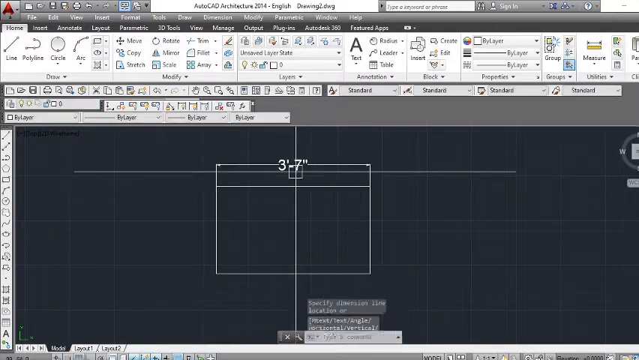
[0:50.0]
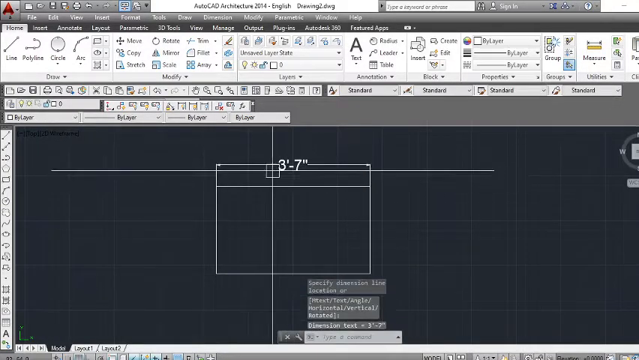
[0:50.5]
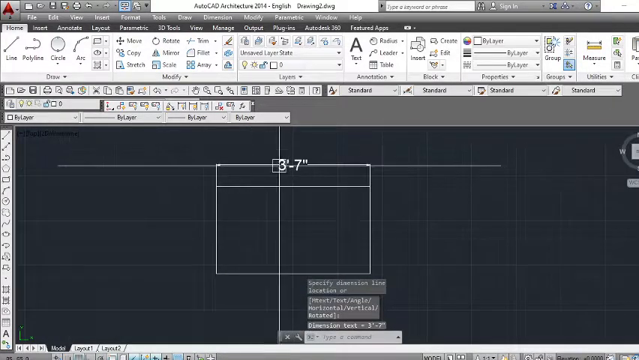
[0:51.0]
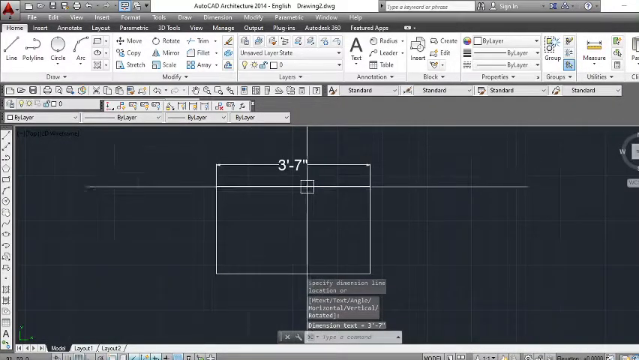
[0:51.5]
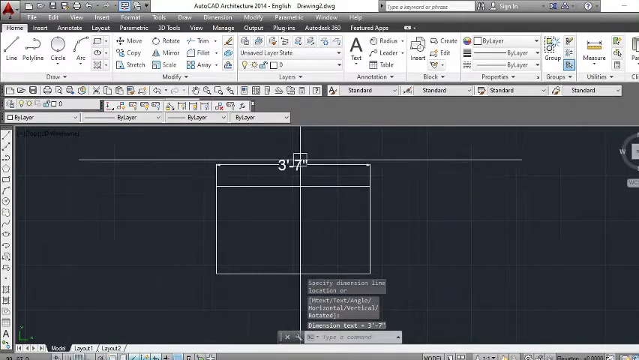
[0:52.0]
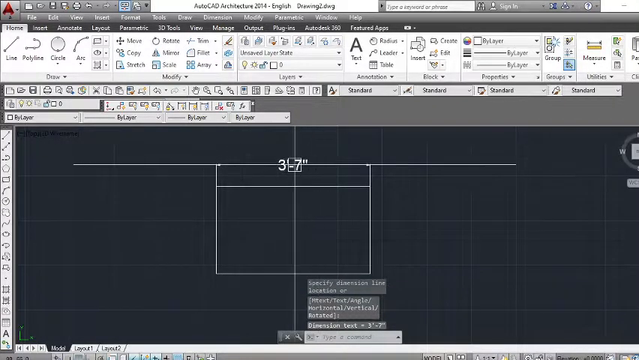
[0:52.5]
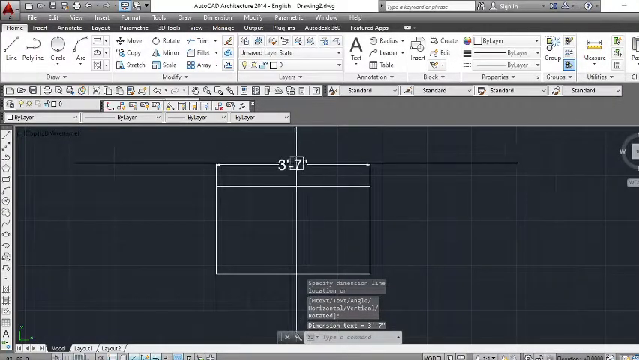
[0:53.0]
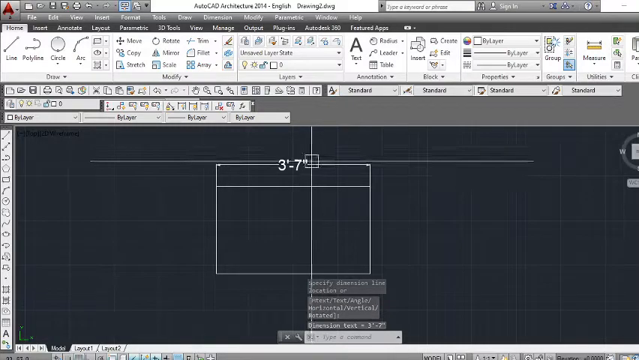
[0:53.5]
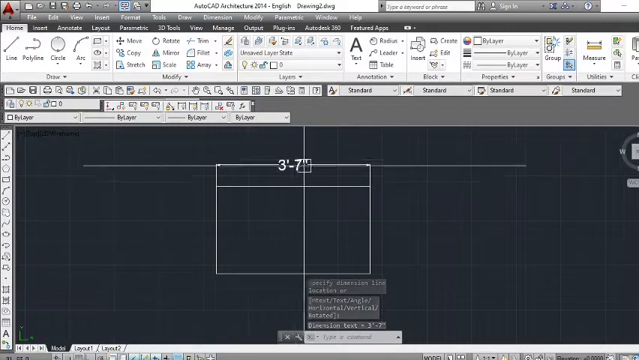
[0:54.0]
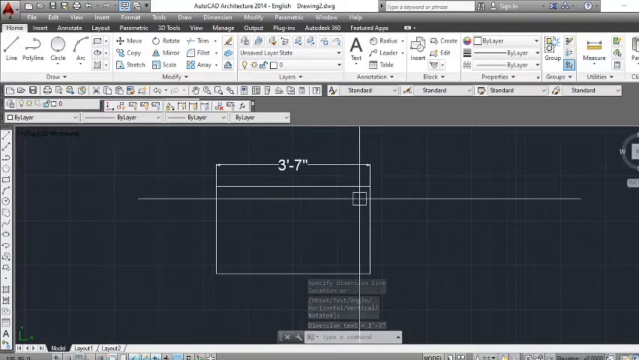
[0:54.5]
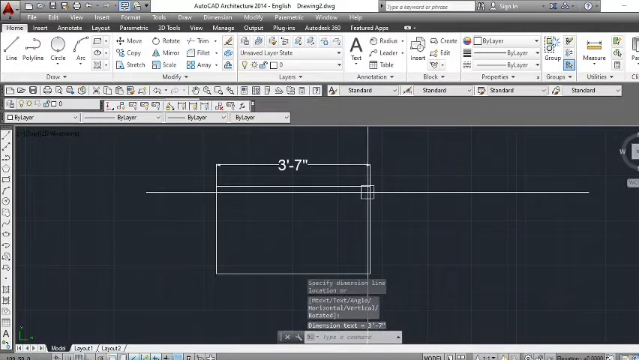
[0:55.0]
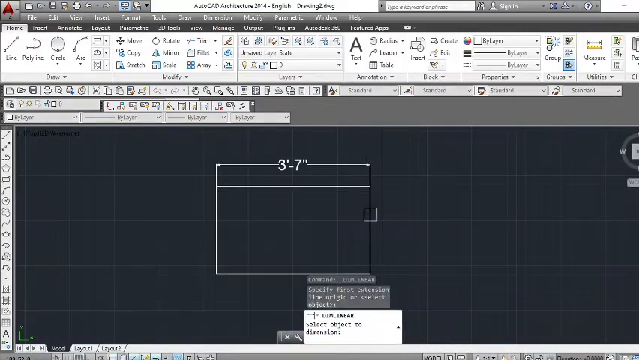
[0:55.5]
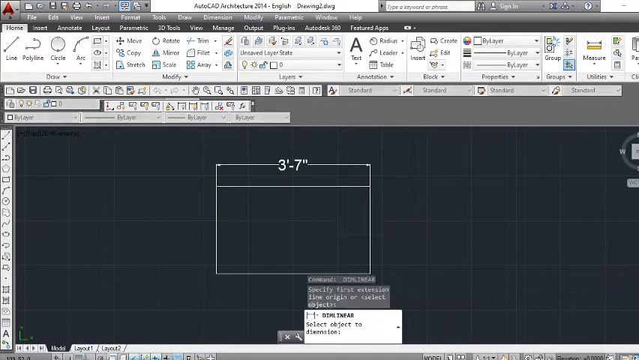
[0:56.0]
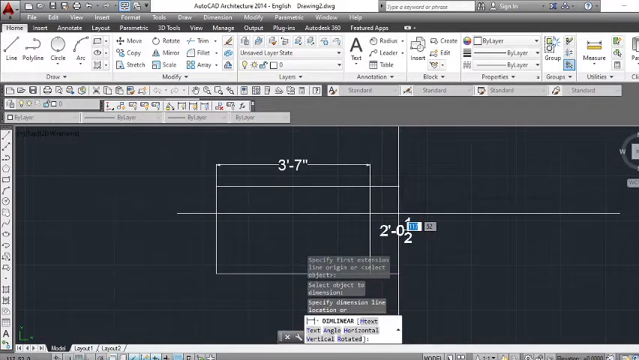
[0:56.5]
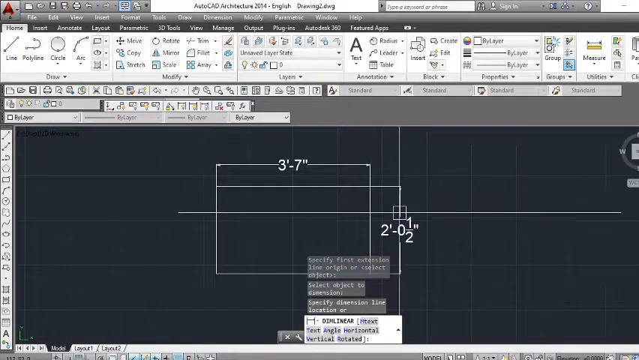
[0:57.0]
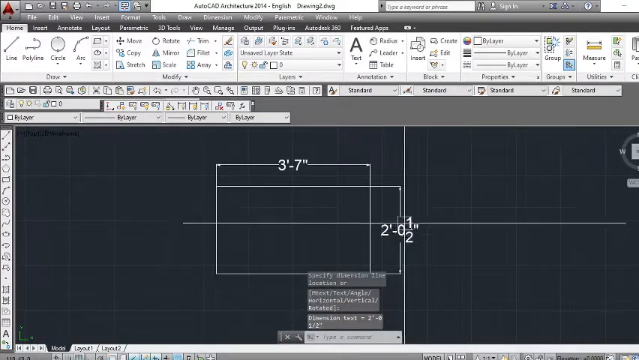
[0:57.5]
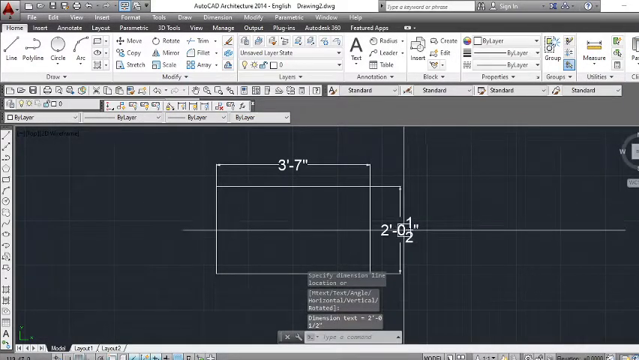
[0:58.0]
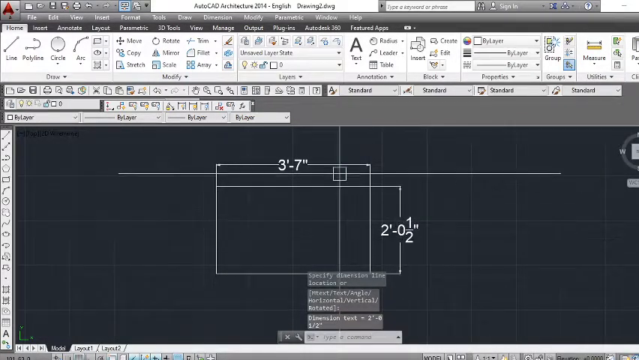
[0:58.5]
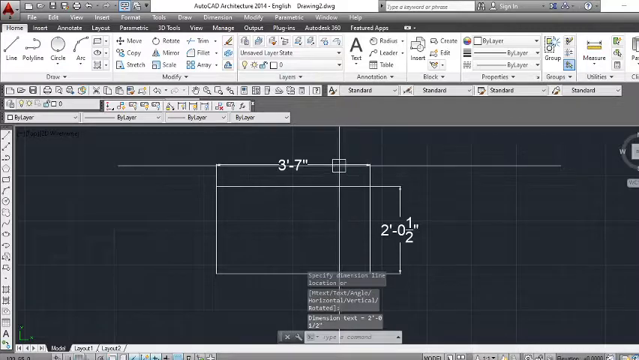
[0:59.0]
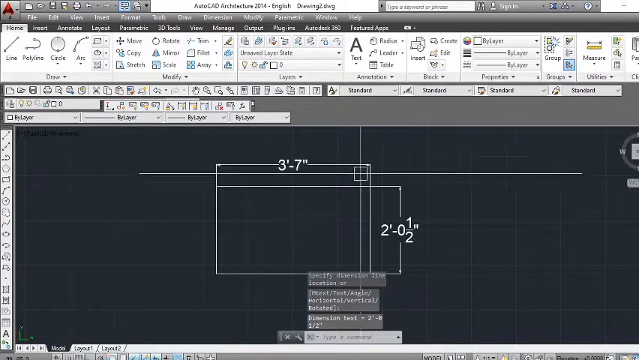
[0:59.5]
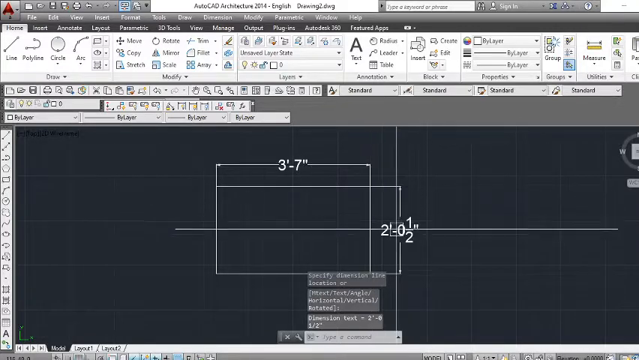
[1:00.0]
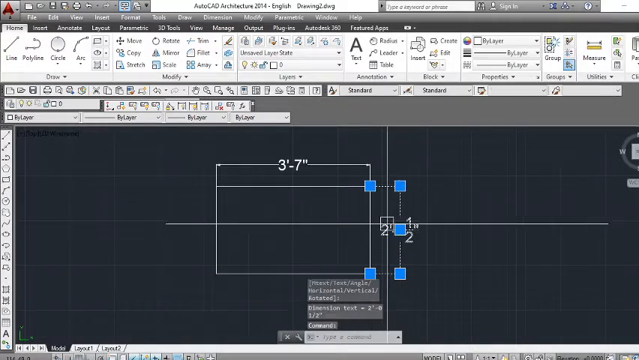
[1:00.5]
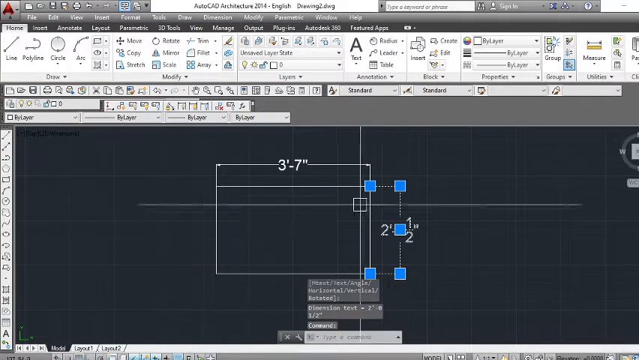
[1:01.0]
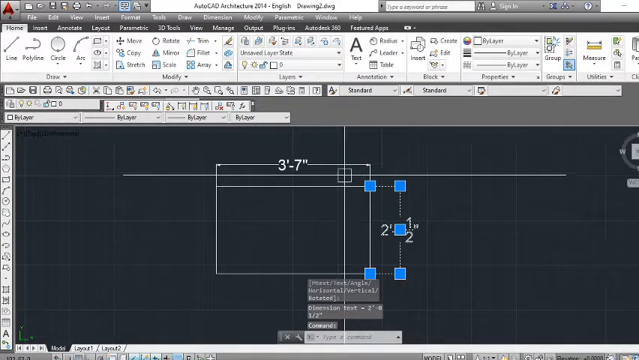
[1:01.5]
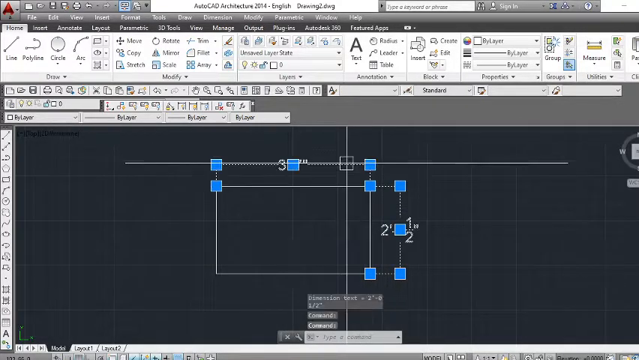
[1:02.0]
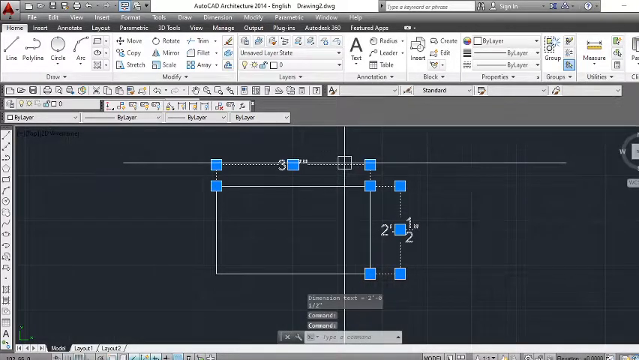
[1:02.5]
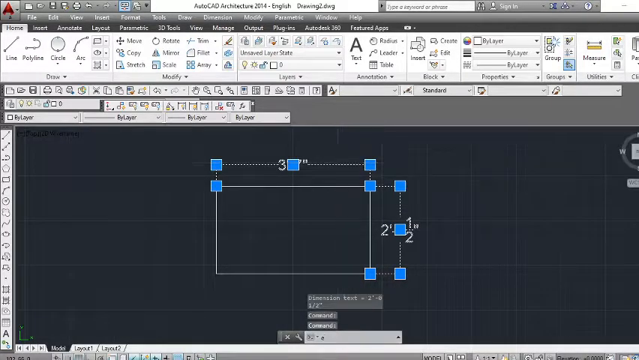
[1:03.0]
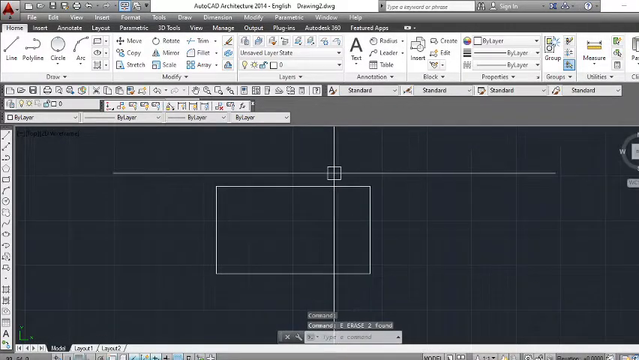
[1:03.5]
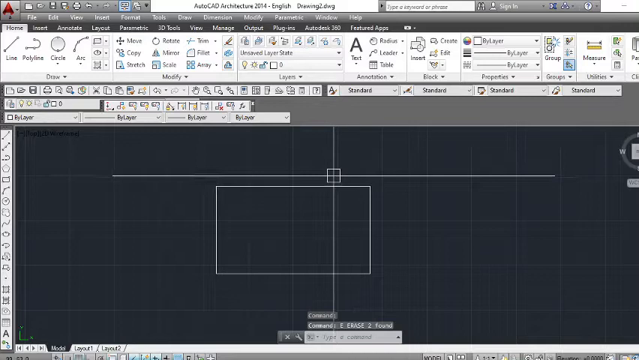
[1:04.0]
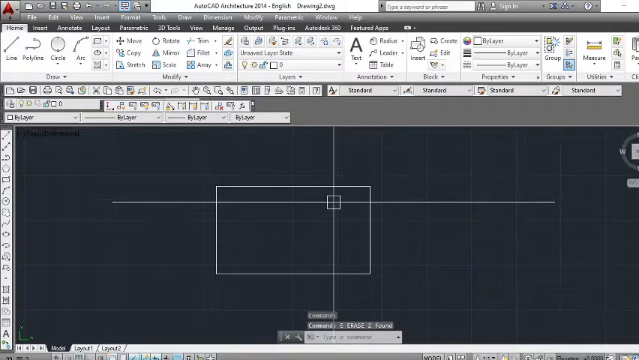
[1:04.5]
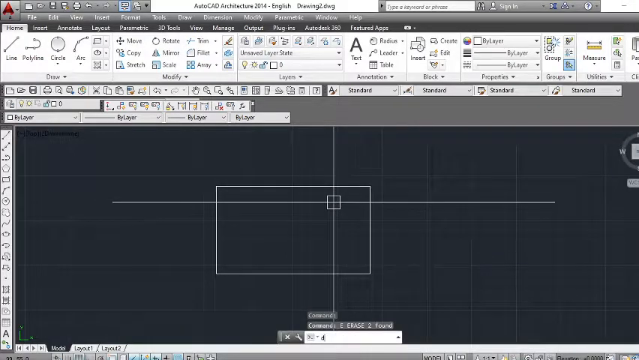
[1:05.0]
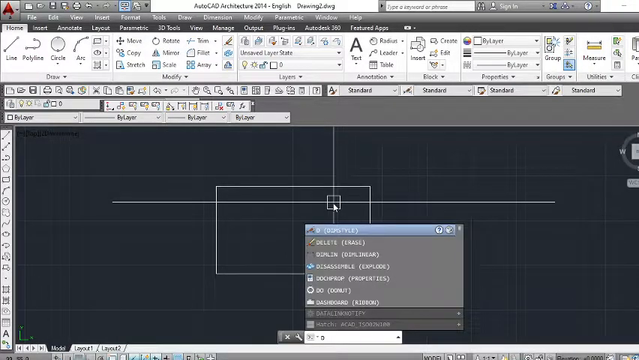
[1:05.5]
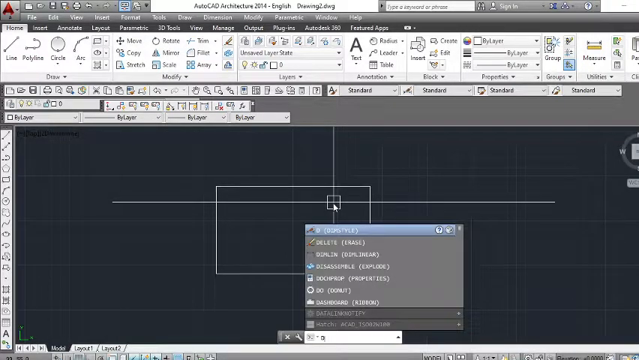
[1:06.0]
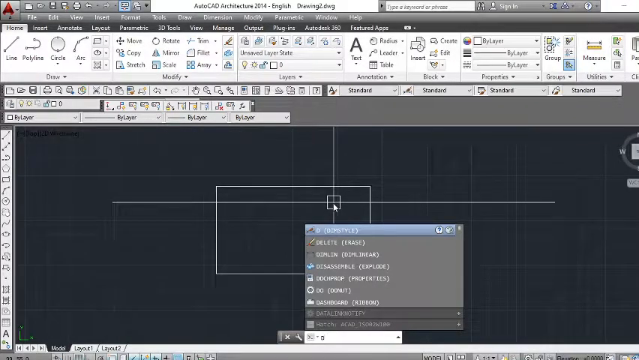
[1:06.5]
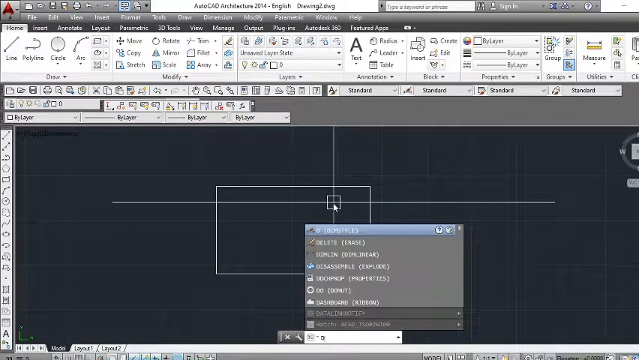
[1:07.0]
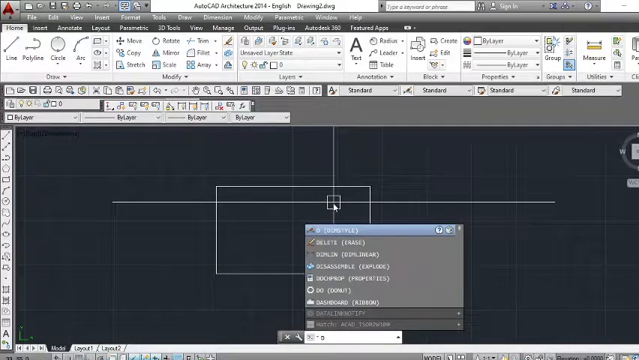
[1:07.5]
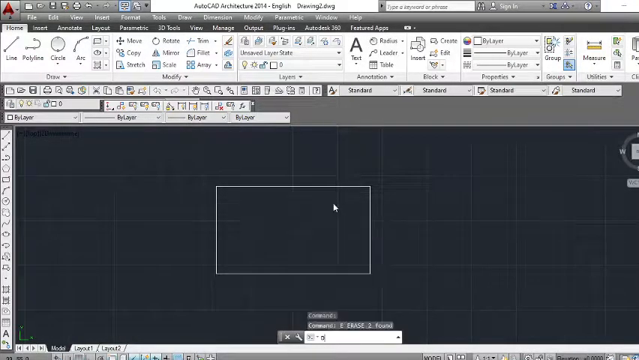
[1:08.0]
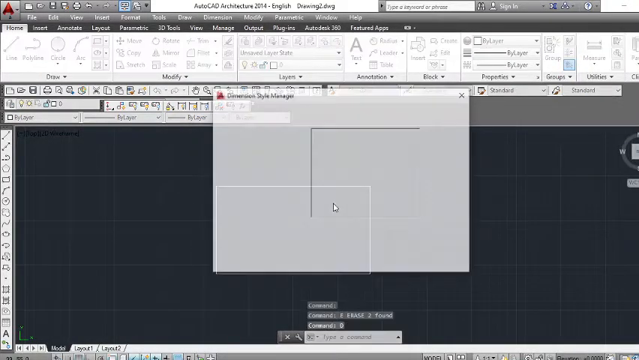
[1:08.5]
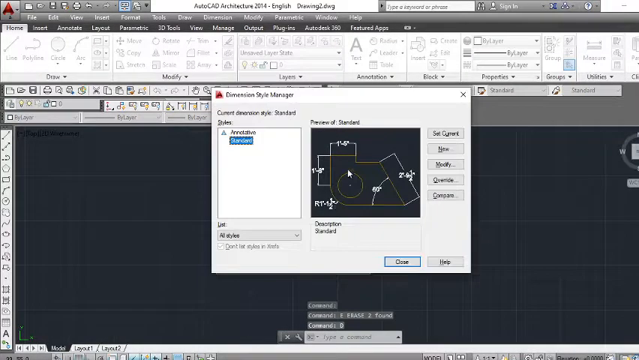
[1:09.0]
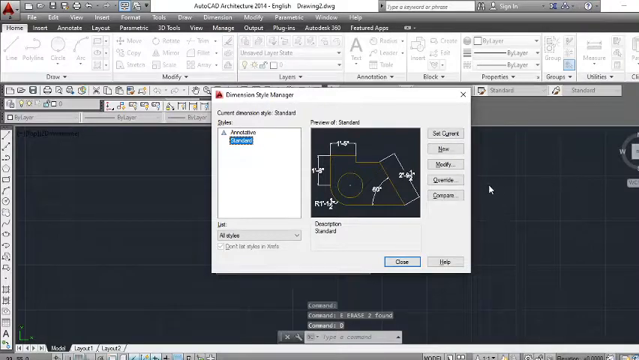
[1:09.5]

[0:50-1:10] A computer screen shows what looks like a notepad-like program where someone is designing something. In a black area there is a square drawn in white lines, with a cross inside it and the numbers 3 and 7, apparently 3 foot 7 inches. Many icons run along the left side of the drawing area and across the top. The mouse moves and more numbers pop up, reading "2-0 and 1 half", apparently 2 foot and a half inch. Several blue squares then pop up, another drop-down menu appears, and another page opens showing something.